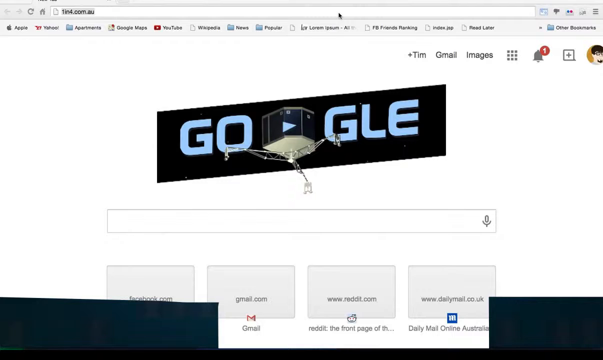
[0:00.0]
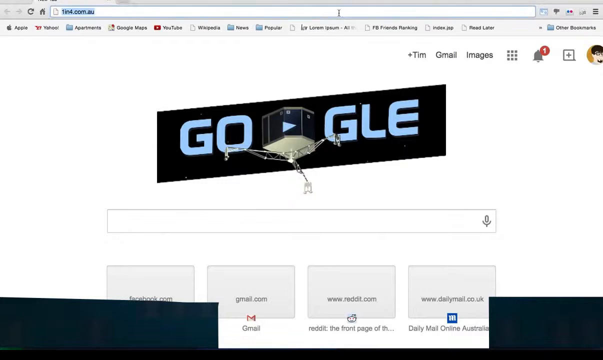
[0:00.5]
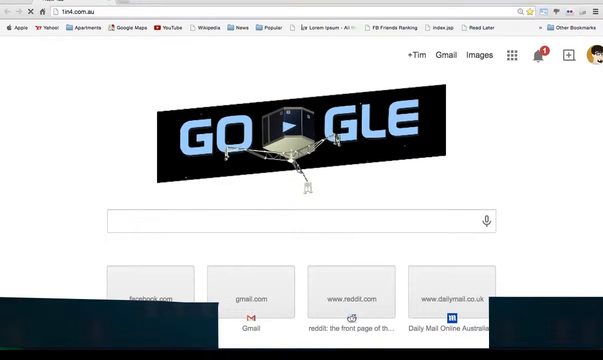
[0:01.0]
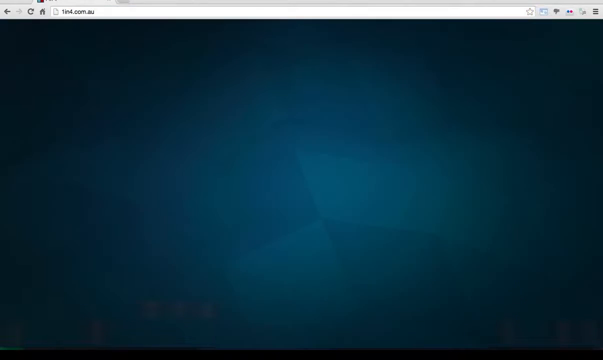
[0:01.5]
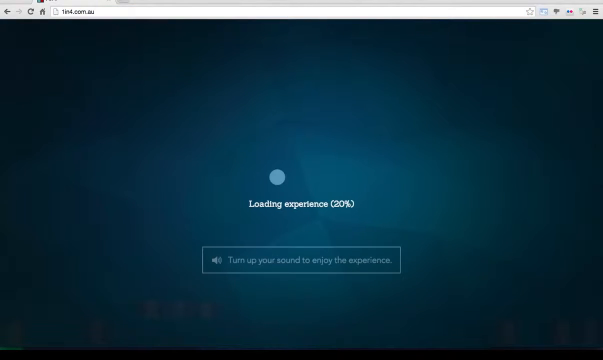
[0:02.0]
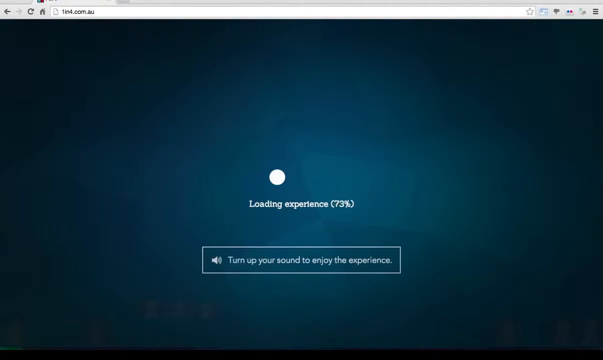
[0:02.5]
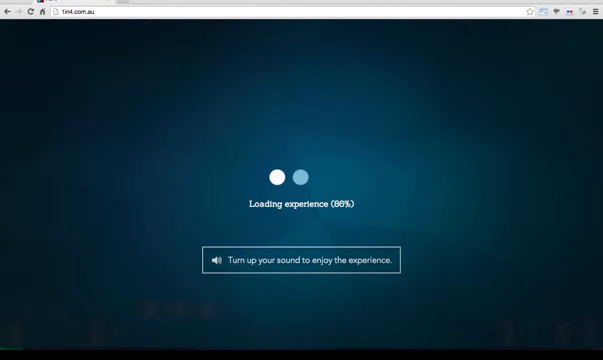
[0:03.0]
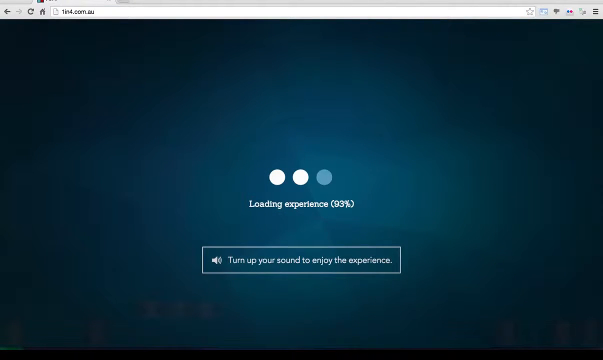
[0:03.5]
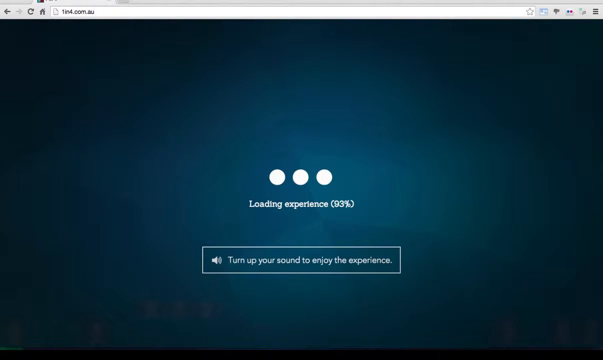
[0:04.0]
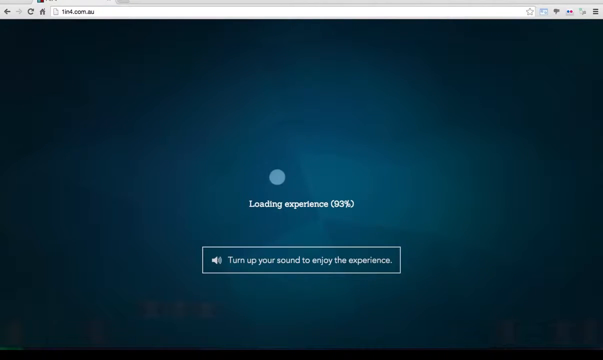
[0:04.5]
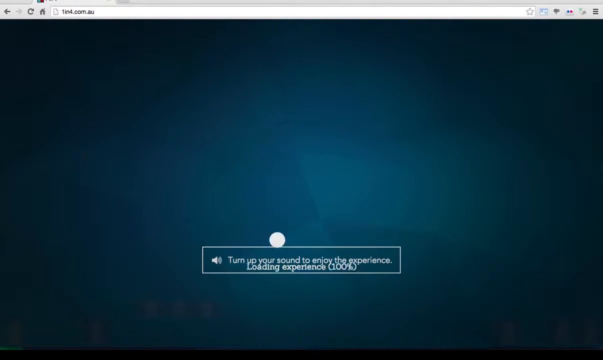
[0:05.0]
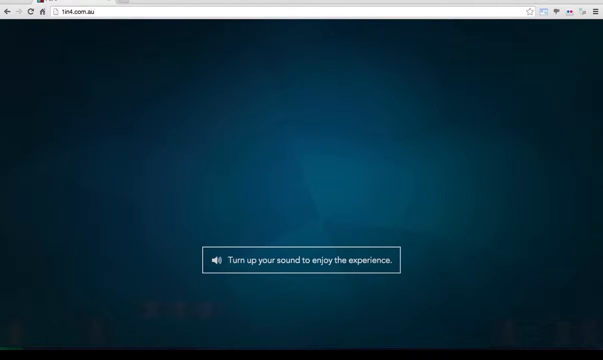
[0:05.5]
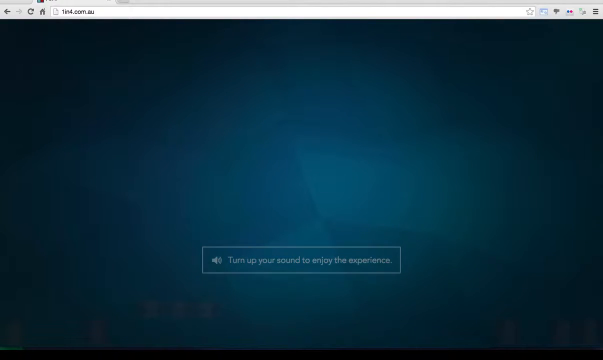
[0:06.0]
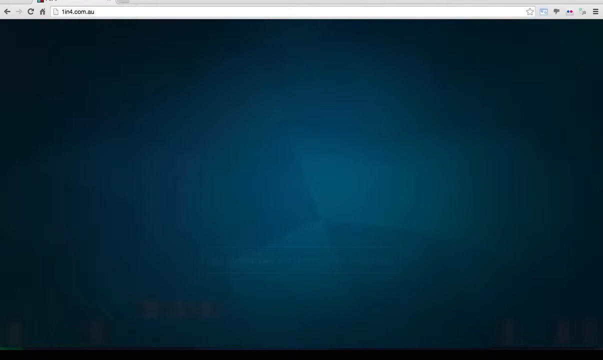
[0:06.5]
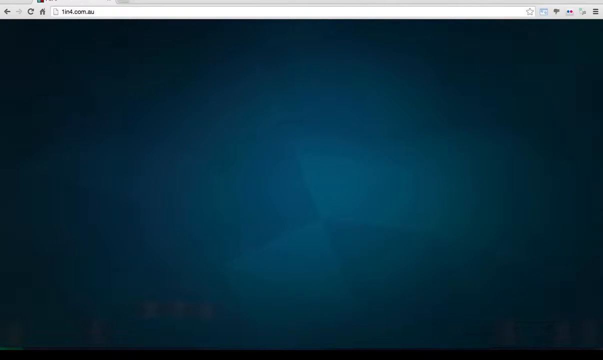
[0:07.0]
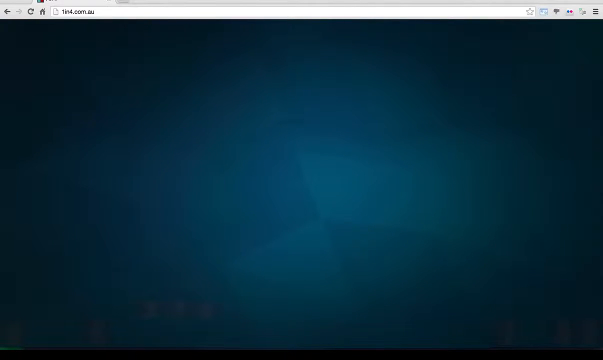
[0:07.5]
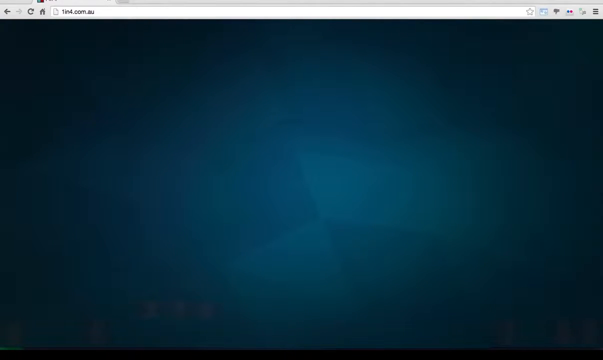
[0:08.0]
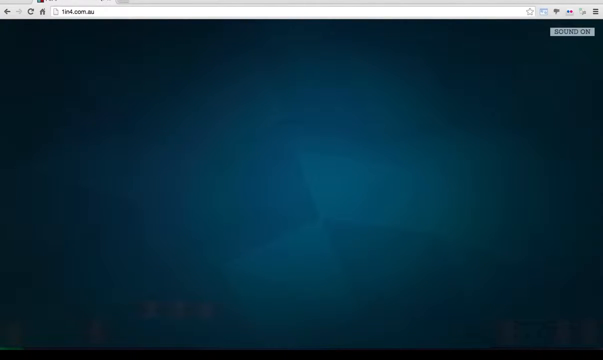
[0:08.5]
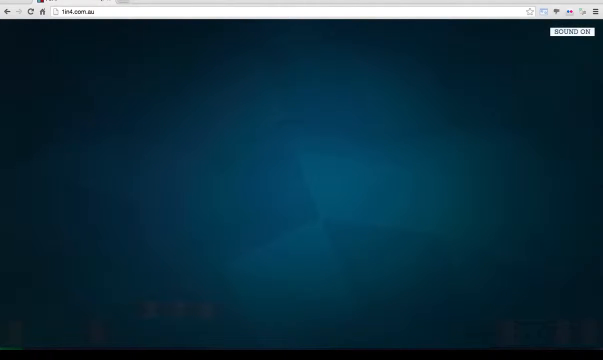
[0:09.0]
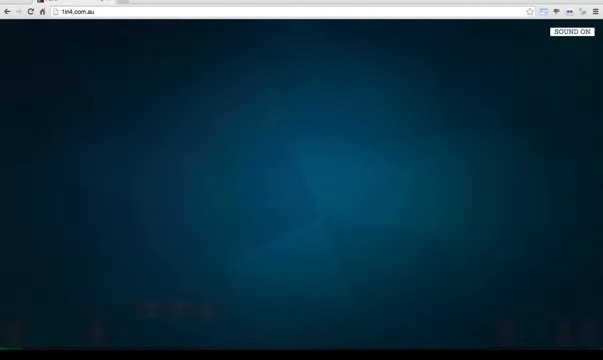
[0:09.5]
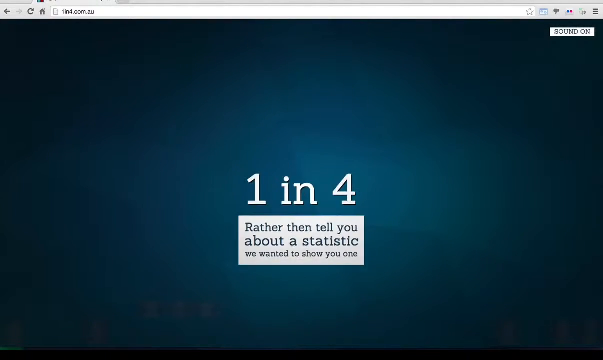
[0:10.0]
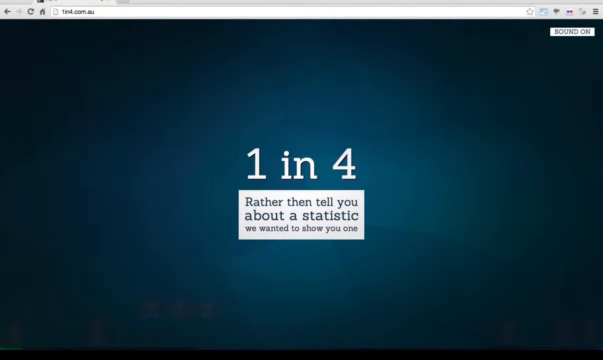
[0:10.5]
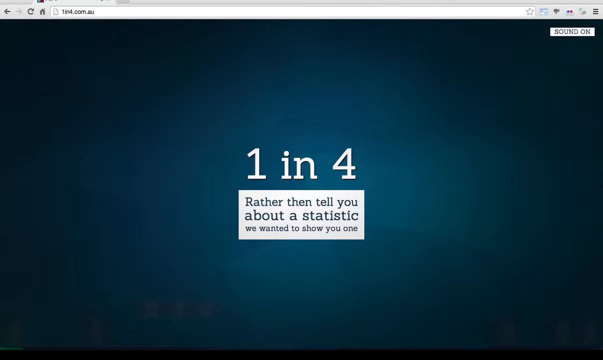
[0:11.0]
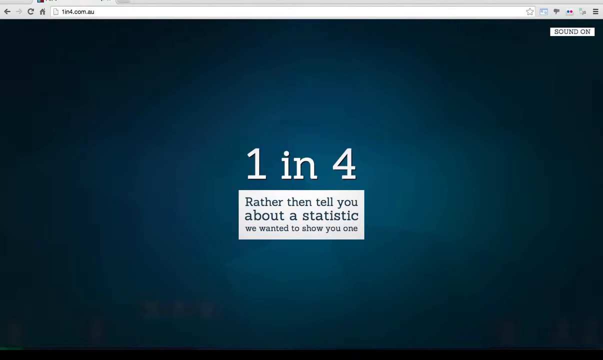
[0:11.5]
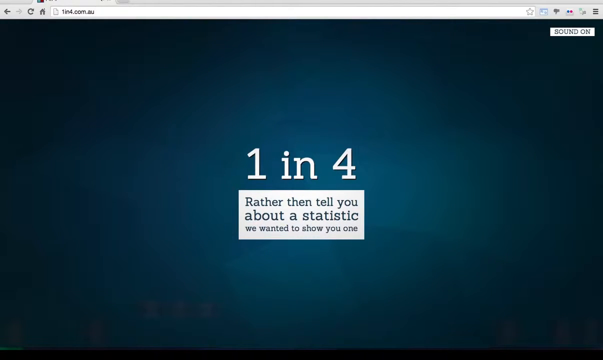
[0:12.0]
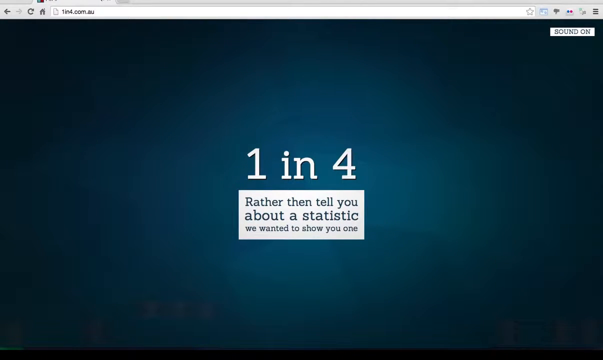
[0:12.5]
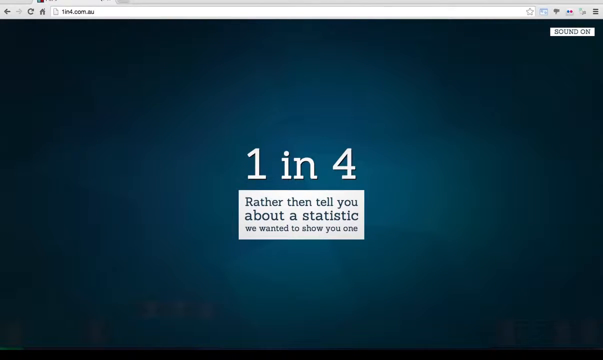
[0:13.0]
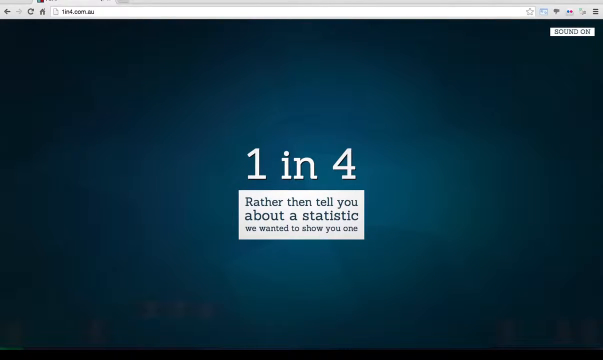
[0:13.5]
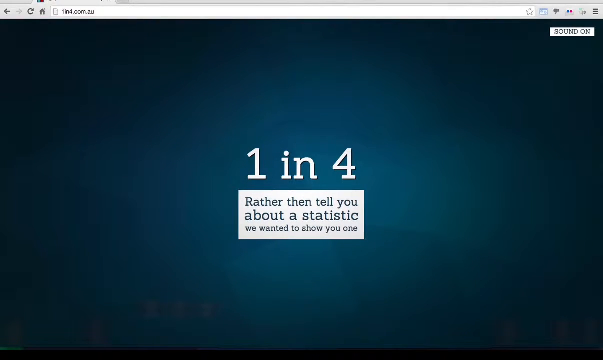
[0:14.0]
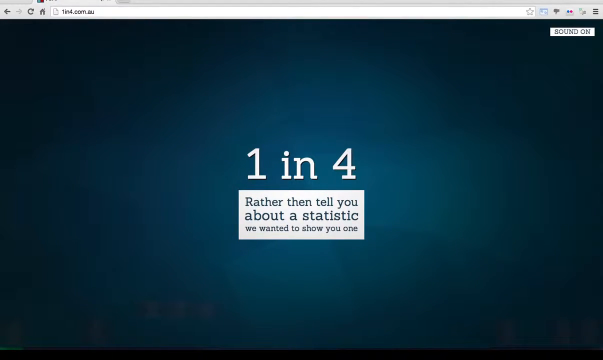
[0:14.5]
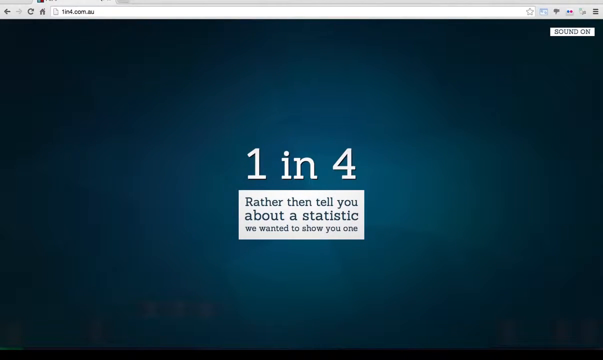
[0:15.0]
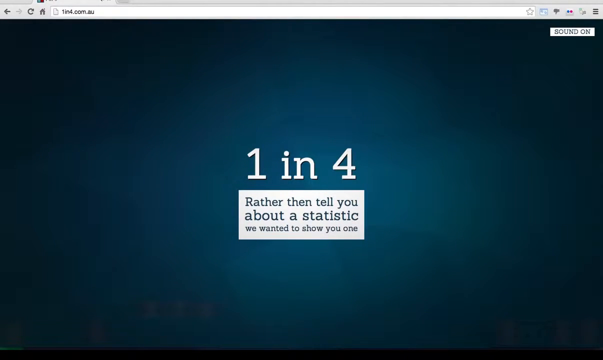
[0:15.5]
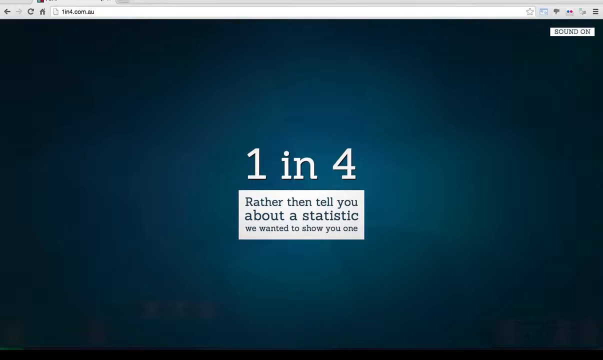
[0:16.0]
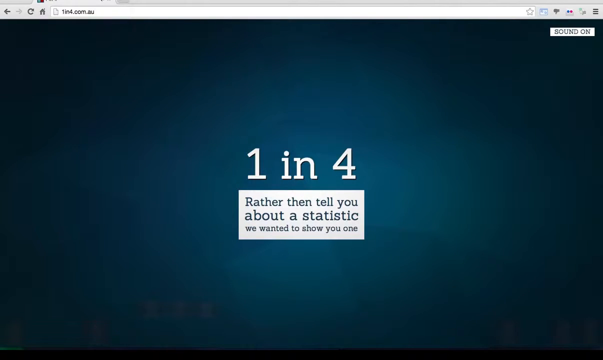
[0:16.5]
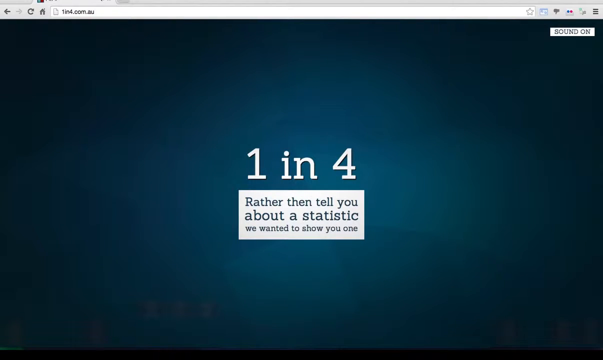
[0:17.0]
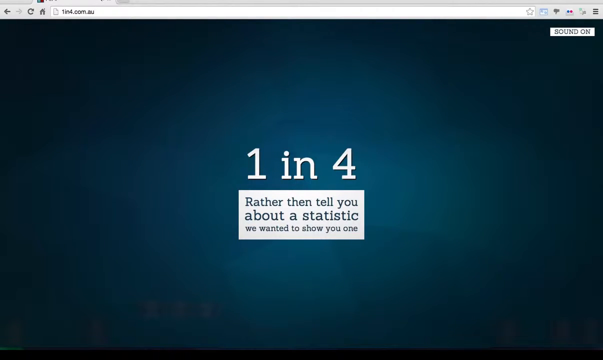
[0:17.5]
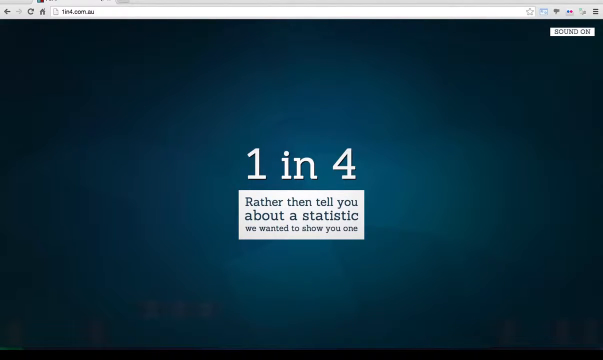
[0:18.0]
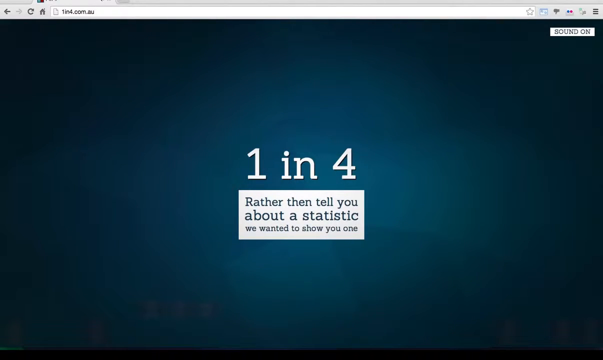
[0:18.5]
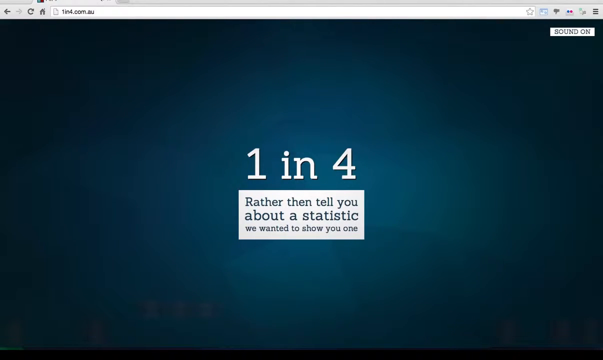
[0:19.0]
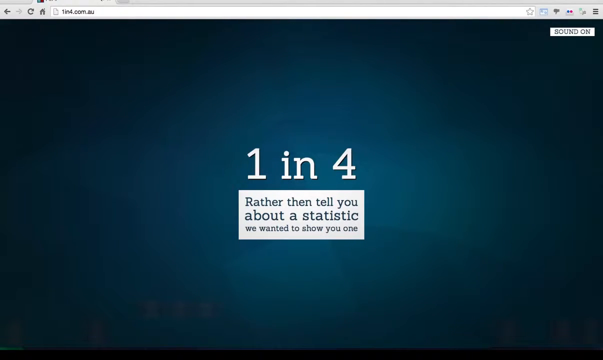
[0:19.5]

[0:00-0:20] The Go GLE logo appears at the top, with a forward arrow in between the two. It is in light blue letters on a black background, which in turn sits on an overall white background. A steel girder tripod is also part of the logo. Below are facebook.com, gmail.com, www.reddit.com and dailymail.co.uk, and at the bottom of the screen there are connections or buttons for those. The Go GLE page appears to show "Tim," "gmail" and "images." The screen then shifts to a black background with white lettering reading "one in four," followed by a white sub-background with black lettering: "Rather than tell you about a statistic, we wanted to show you one." It encourages the viewer to turn the sound on. The site is one in four.com.au.